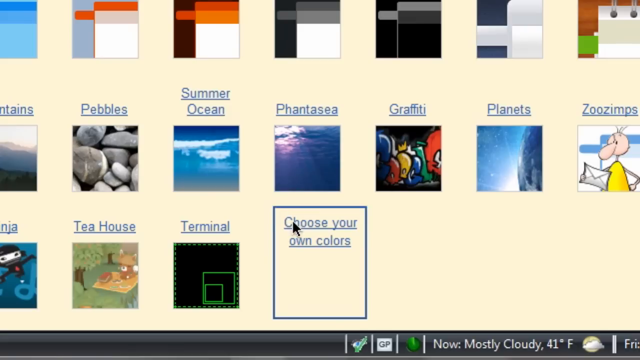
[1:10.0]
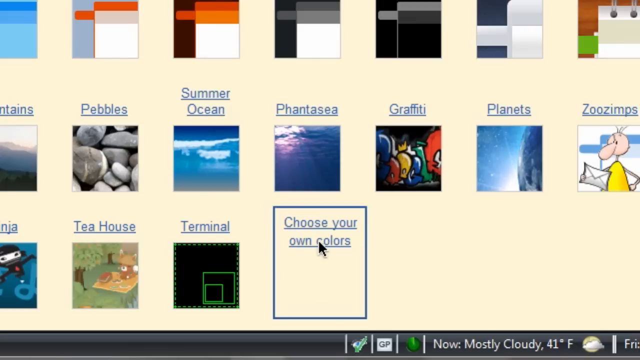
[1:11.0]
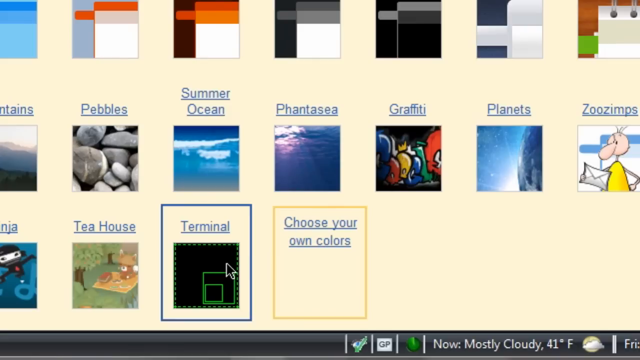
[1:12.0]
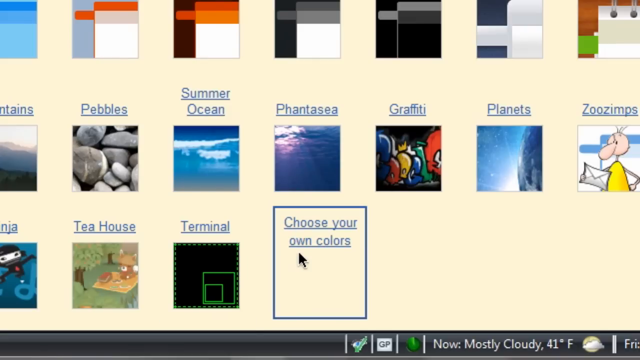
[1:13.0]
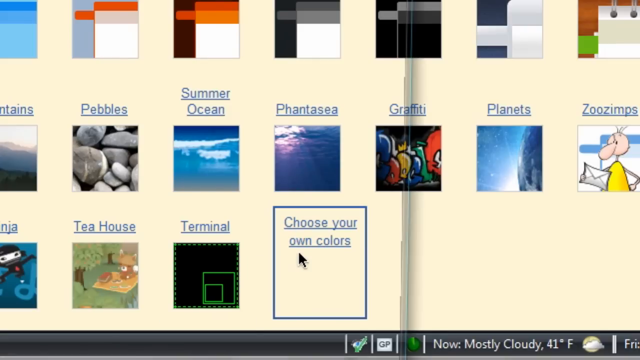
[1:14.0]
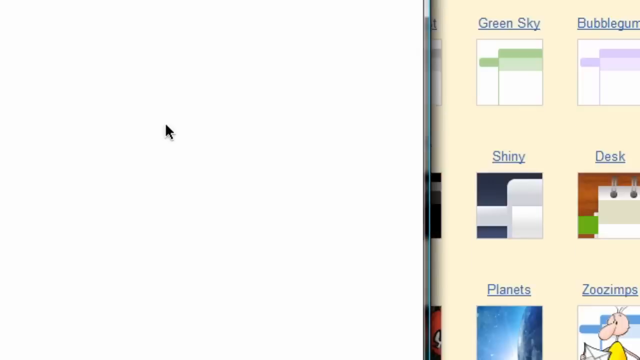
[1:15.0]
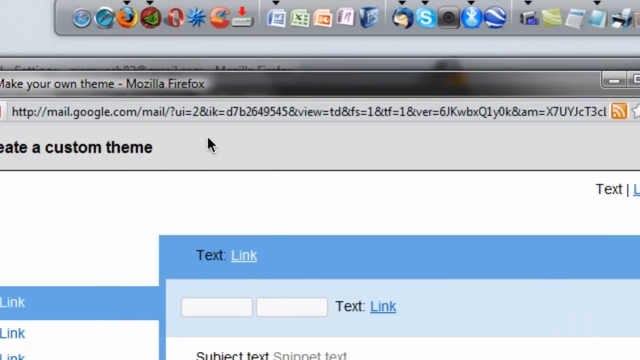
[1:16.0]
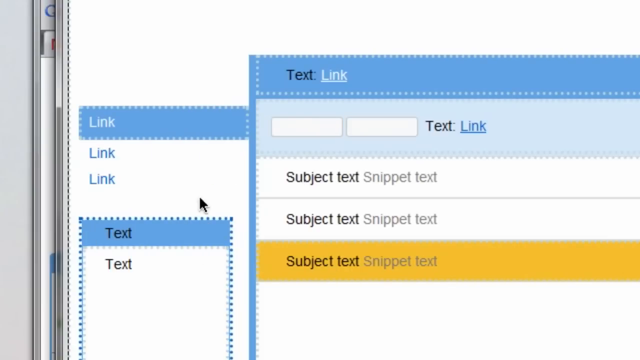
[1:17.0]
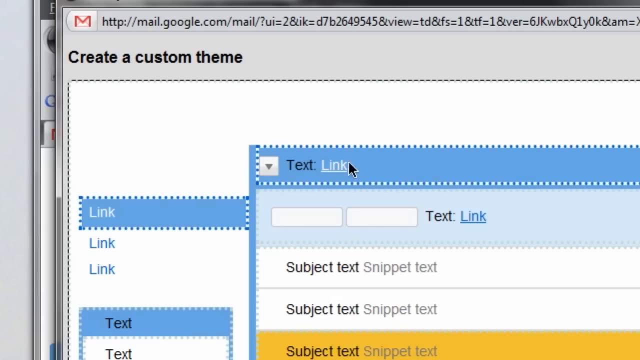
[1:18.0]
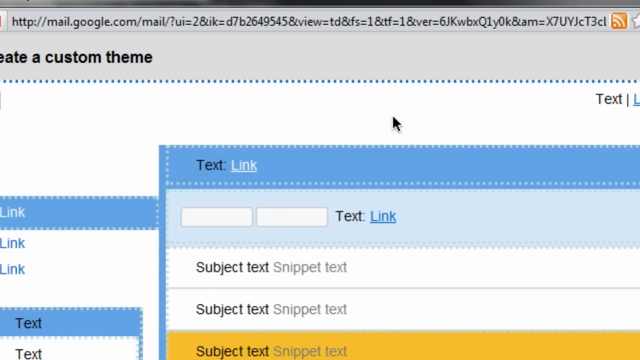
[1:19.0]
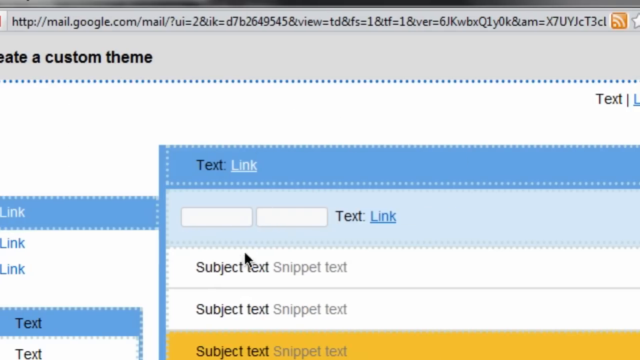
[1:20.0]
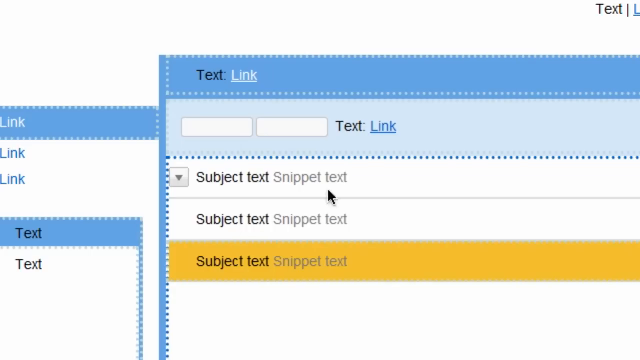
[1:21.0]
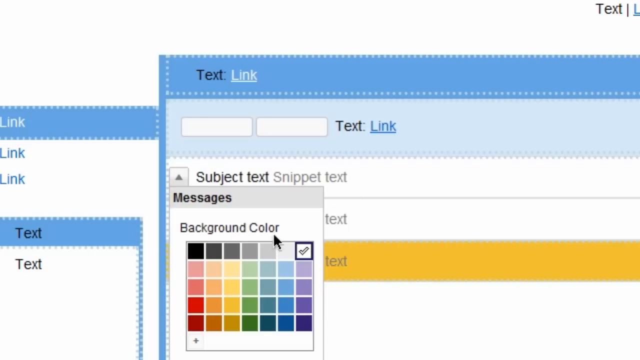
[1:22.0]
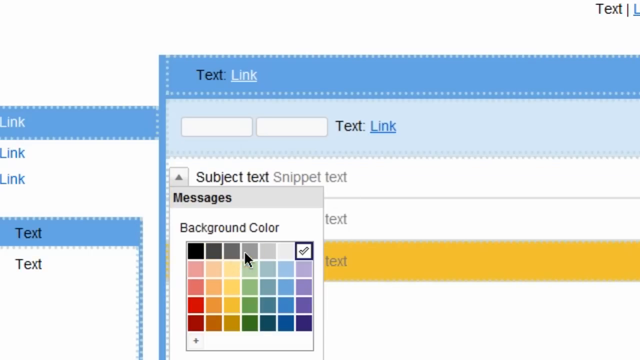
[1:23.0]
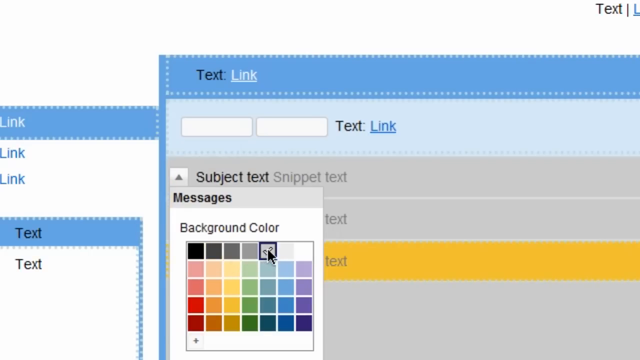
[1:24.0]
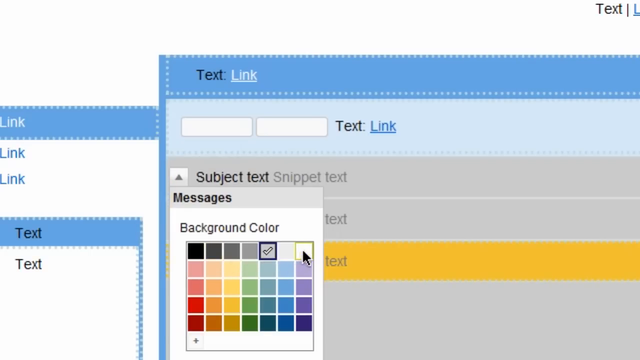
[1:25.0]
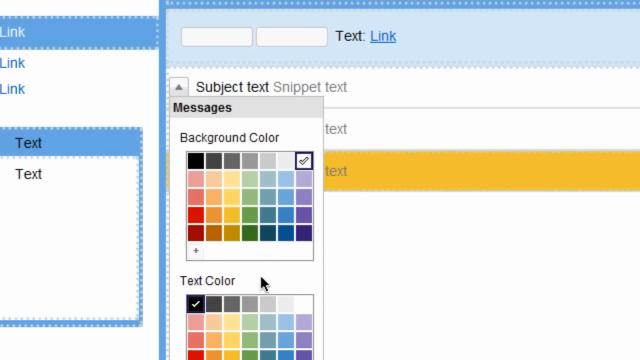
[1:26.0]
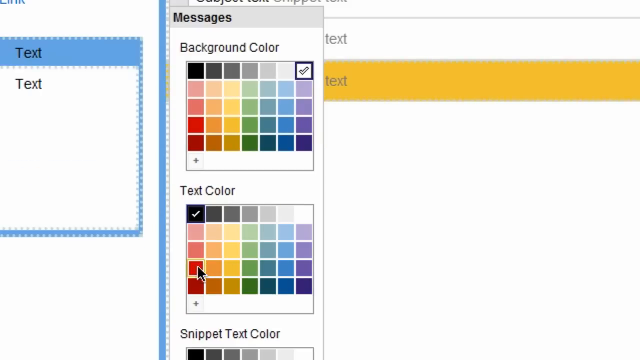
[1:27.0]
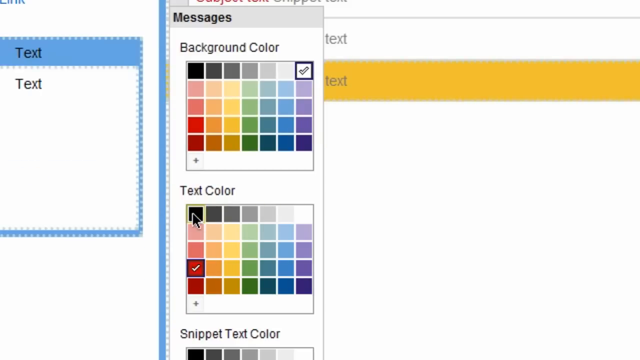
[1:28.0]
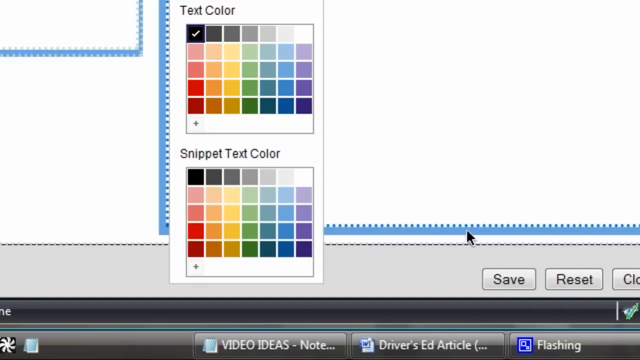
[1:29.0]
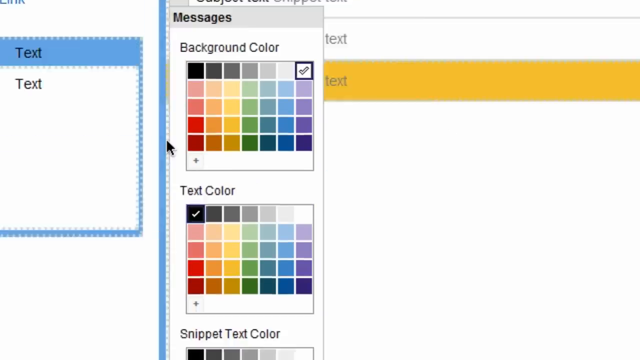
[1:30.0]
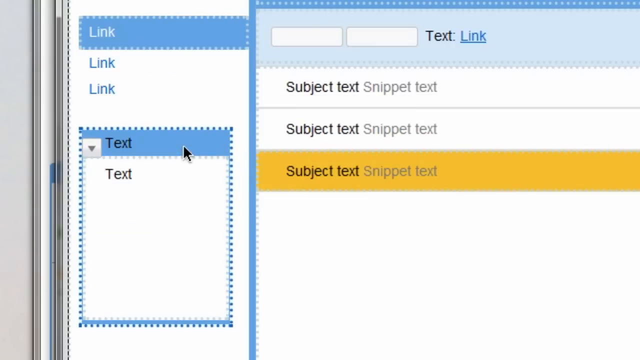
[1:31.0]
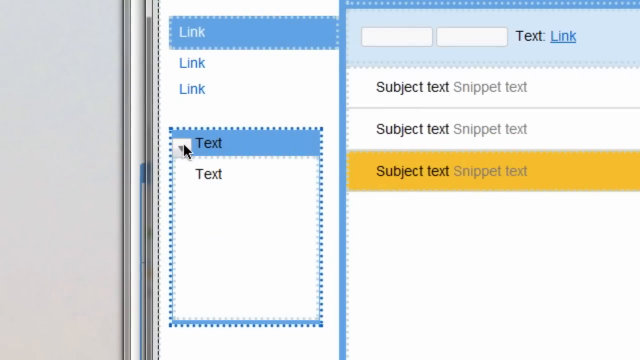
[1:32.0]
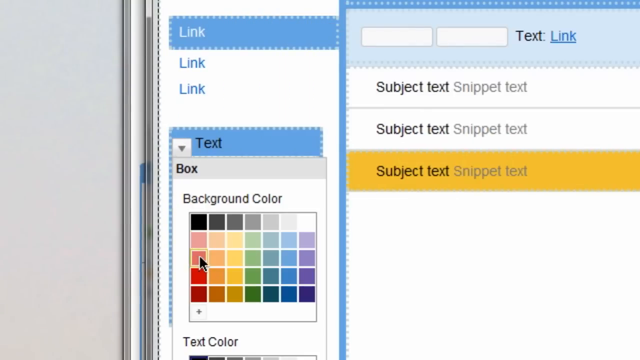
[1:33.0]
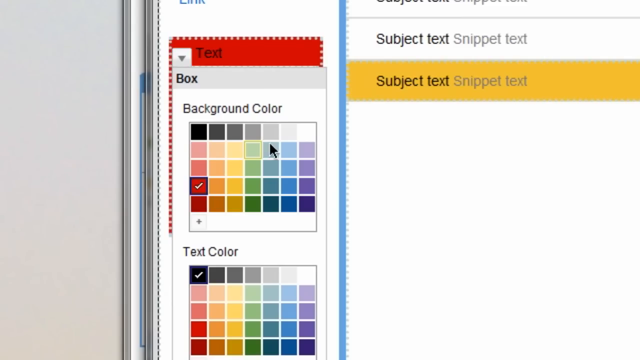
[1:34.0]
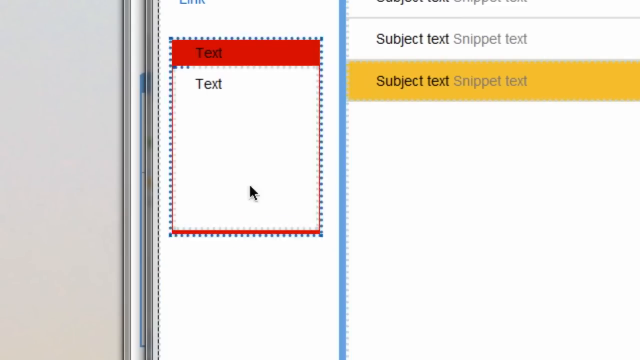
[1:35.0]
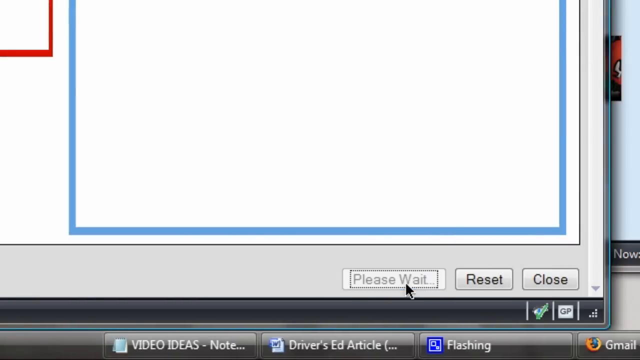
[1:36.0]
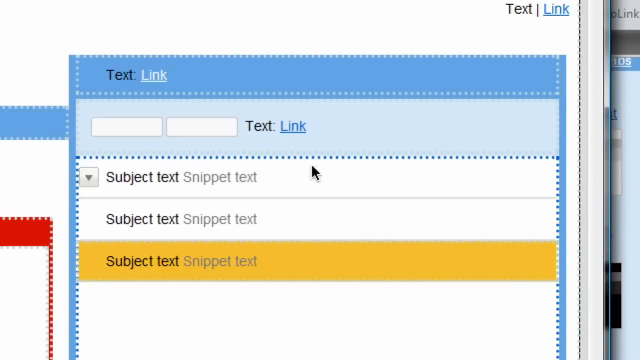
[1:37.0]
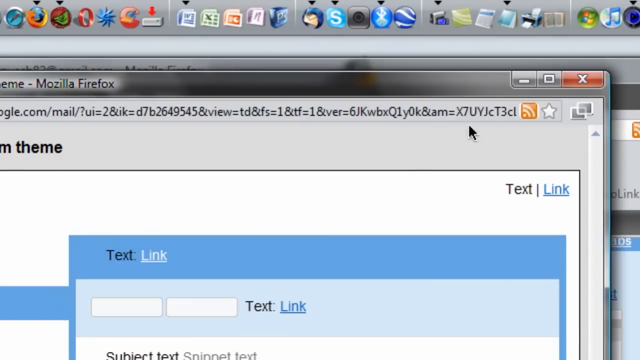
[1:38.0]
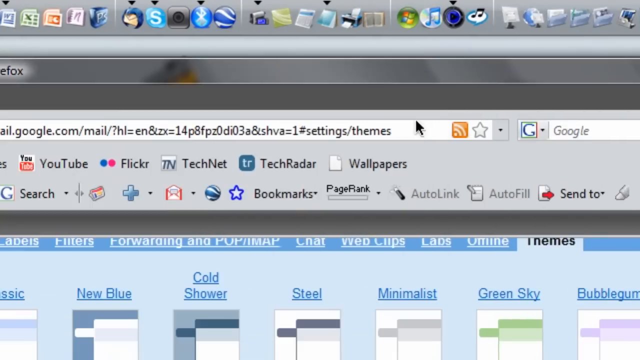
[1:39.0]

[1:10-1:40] The cursor keeps moving between options and seems to select a choose your own colors option at the bottom right-hand side of the screen. A text box pops up with drop-down menus for each section of the screen, where a colour can be chosen from a colour chart. Red has been chosen as one of the backgrounds, apparently the background to the text. Each drop-down menu has a grid five colours down and seven colours across, running from black in the top left-hand corner to purple in the bottom right-hand corner. The user clicks save and returns to the original screen. Among the options is one called Zoo Zimps, which appears to be a cartoon character, and another called Tea House, which seems to show an animal having a picnic under a tree.